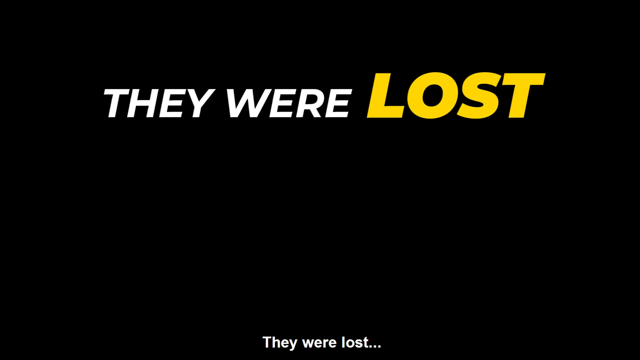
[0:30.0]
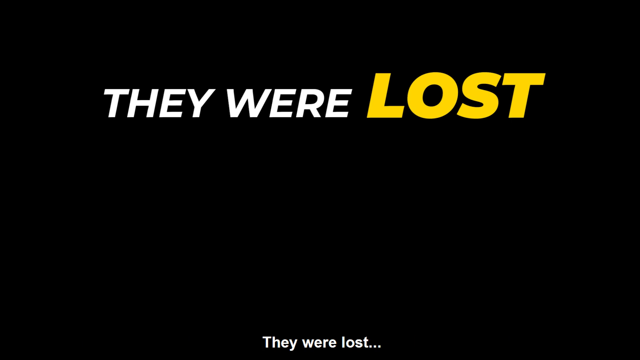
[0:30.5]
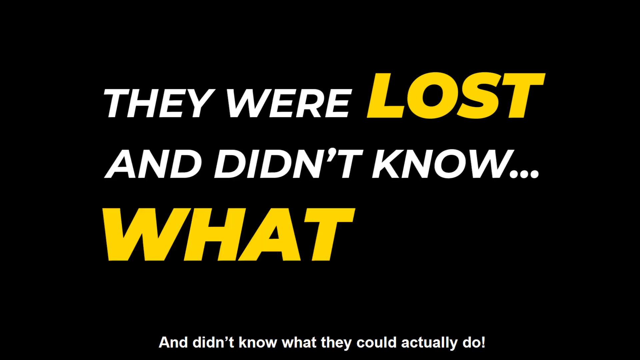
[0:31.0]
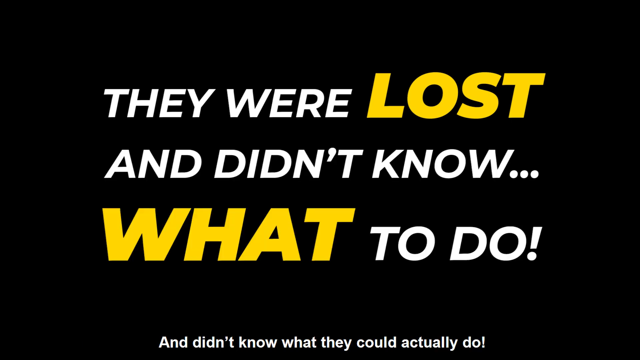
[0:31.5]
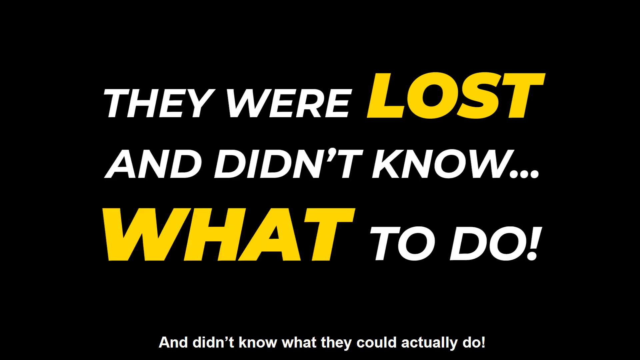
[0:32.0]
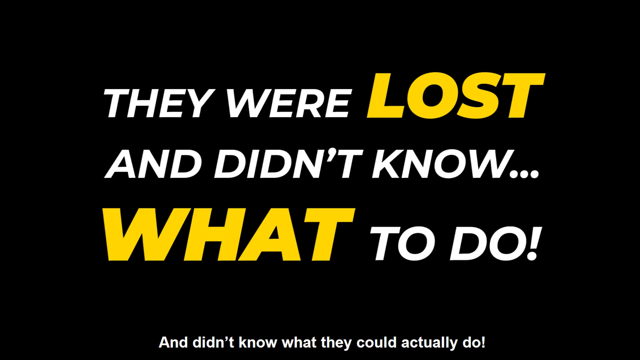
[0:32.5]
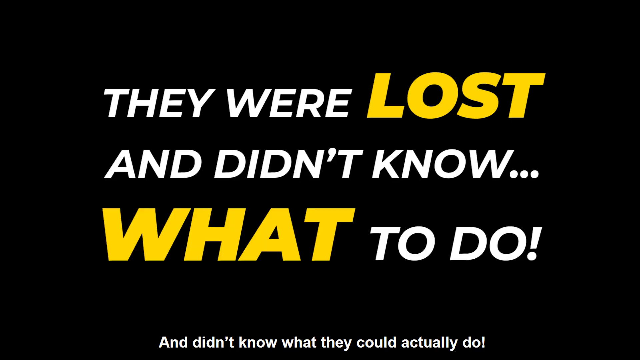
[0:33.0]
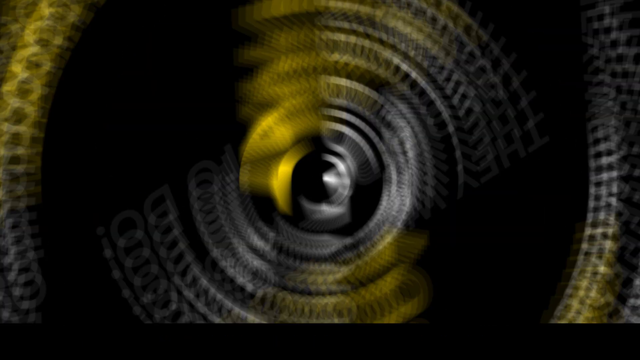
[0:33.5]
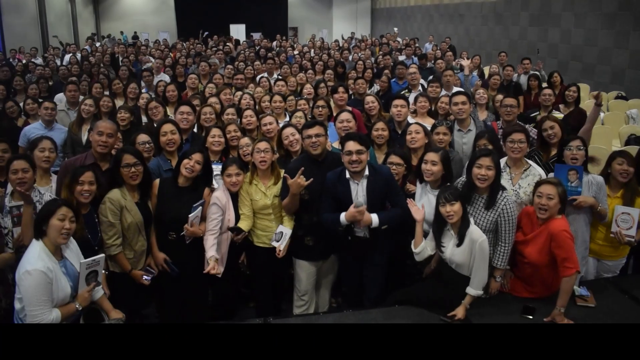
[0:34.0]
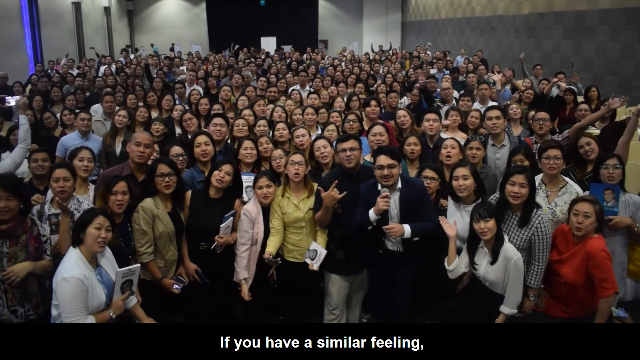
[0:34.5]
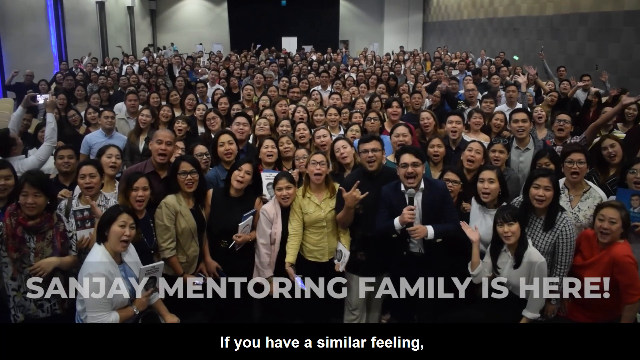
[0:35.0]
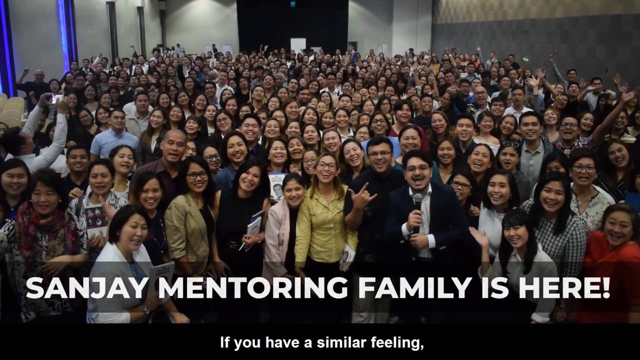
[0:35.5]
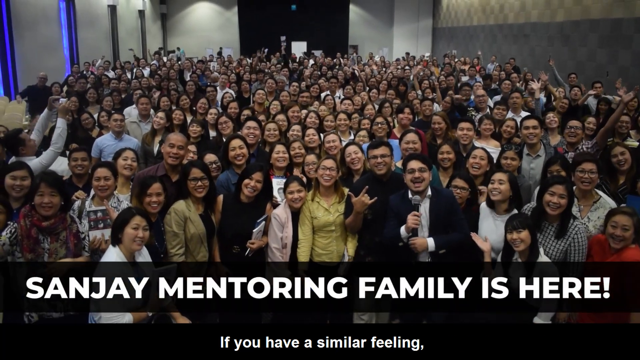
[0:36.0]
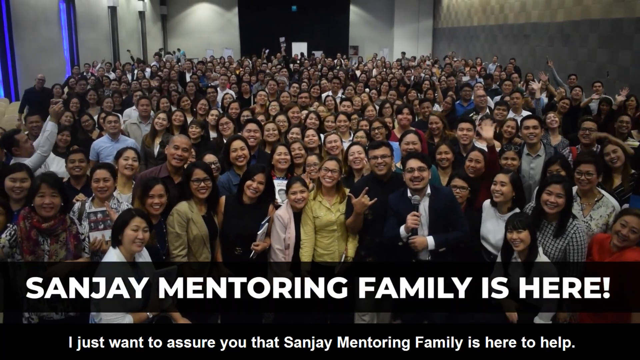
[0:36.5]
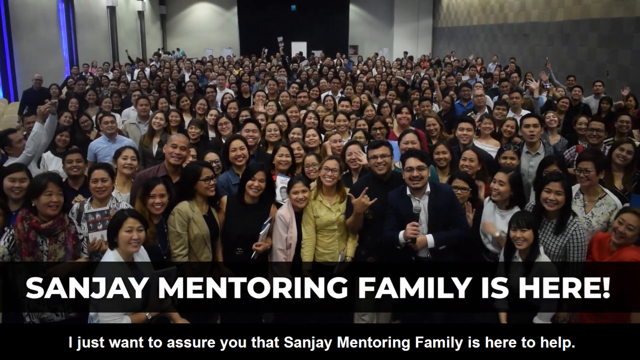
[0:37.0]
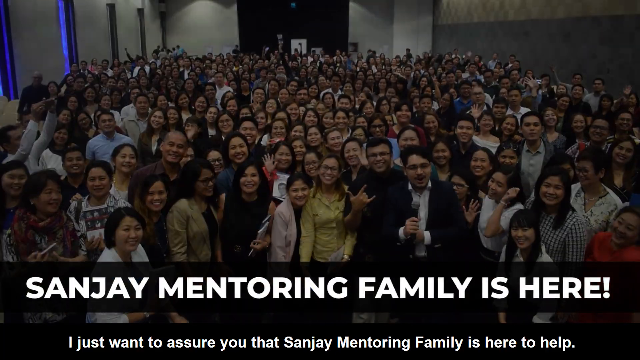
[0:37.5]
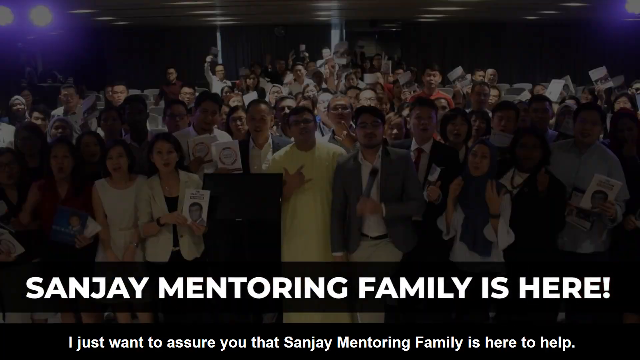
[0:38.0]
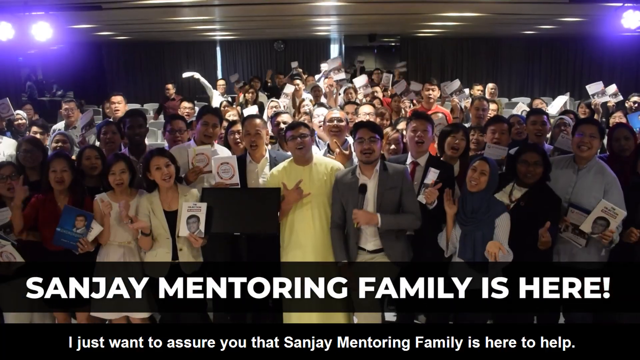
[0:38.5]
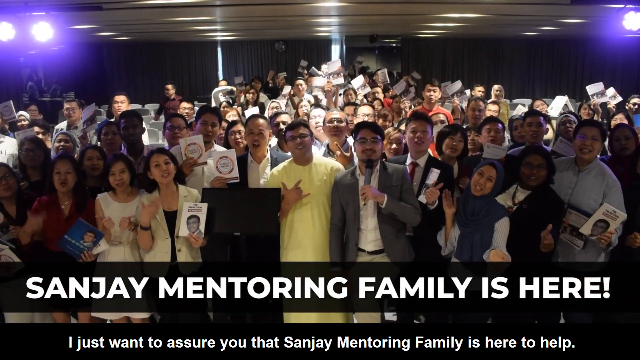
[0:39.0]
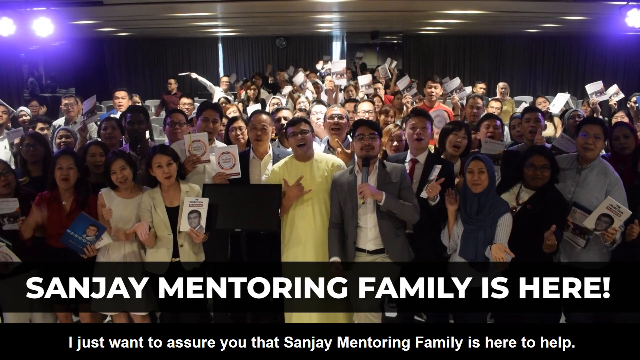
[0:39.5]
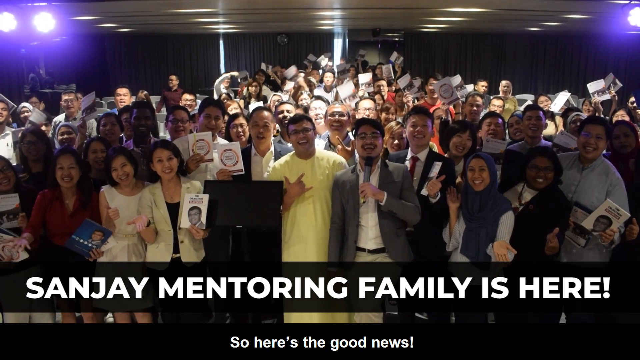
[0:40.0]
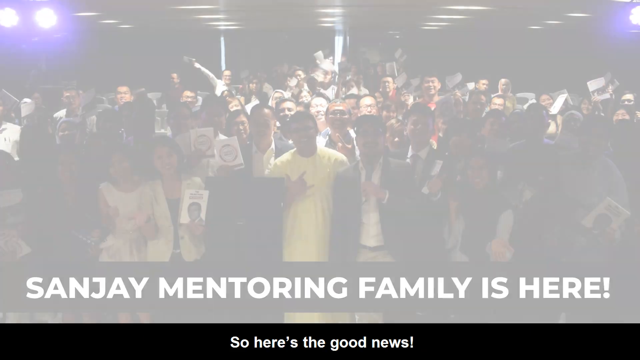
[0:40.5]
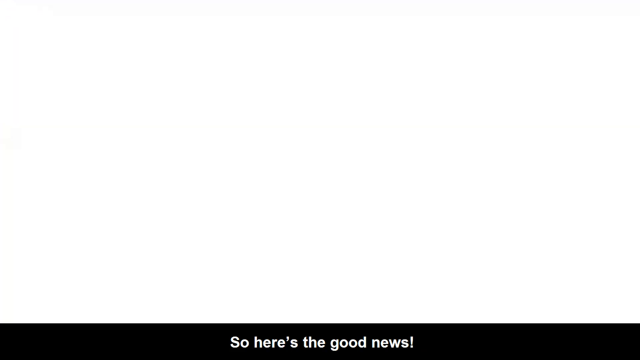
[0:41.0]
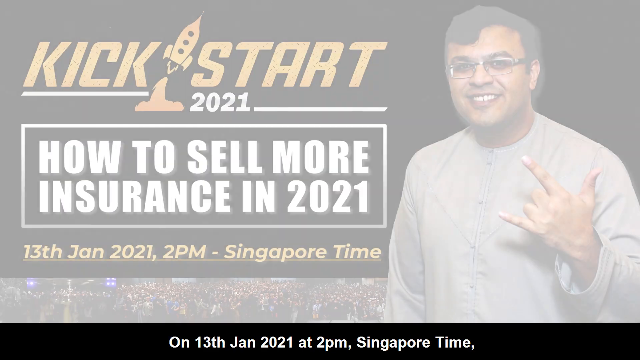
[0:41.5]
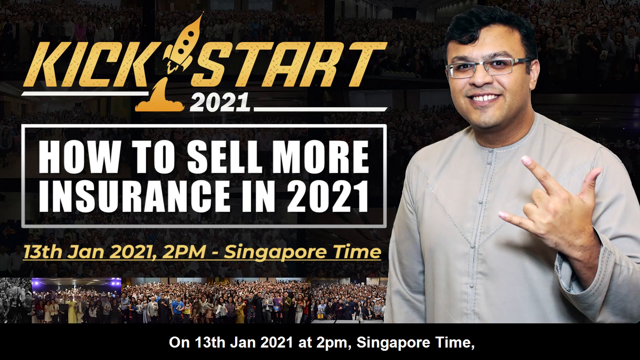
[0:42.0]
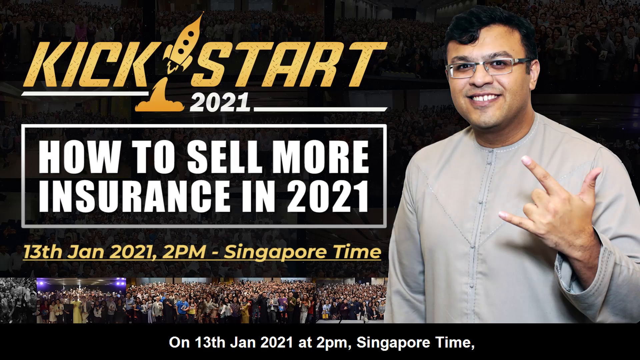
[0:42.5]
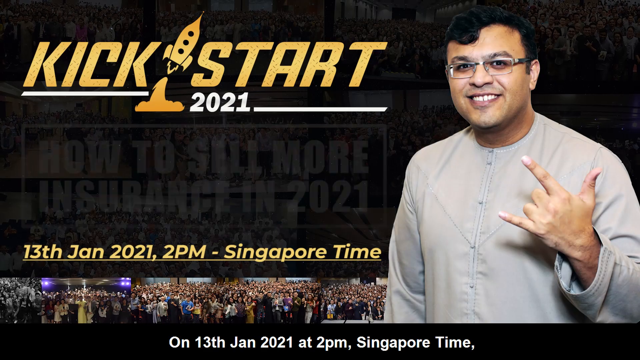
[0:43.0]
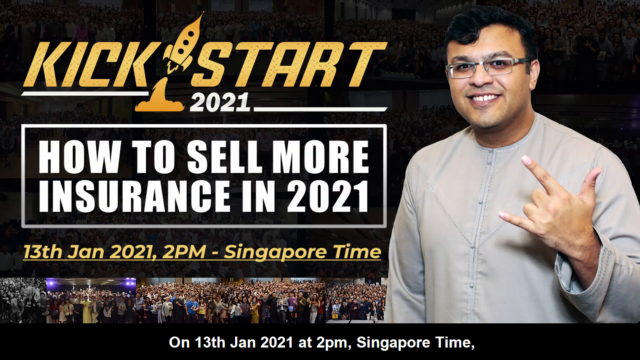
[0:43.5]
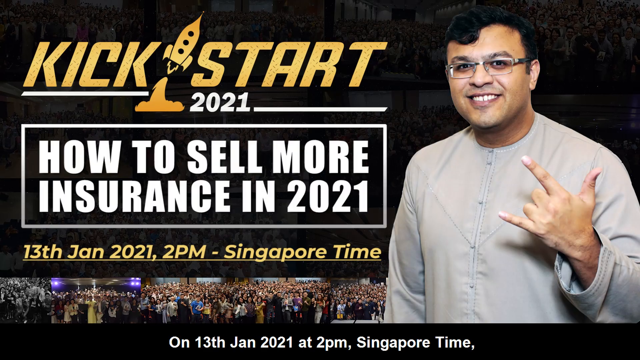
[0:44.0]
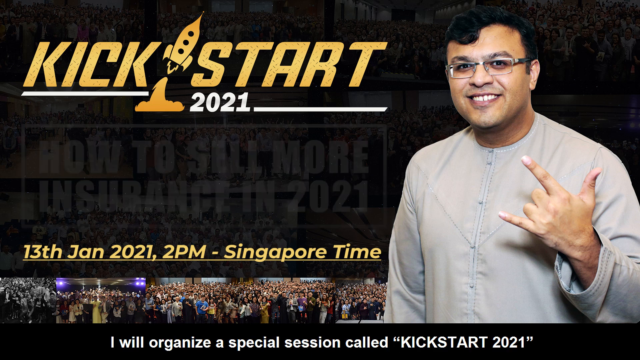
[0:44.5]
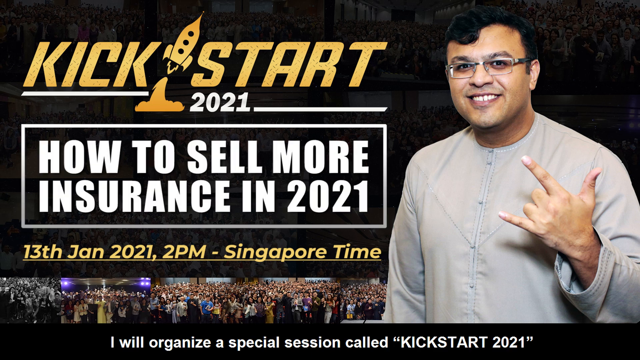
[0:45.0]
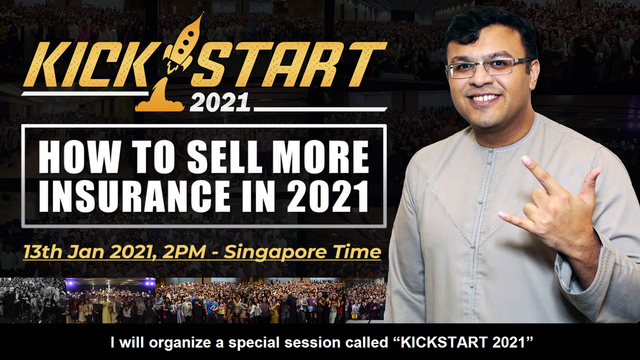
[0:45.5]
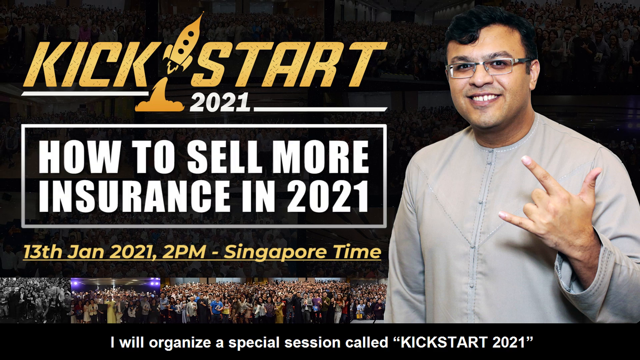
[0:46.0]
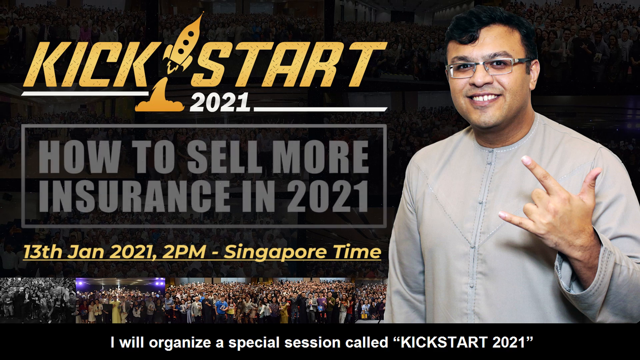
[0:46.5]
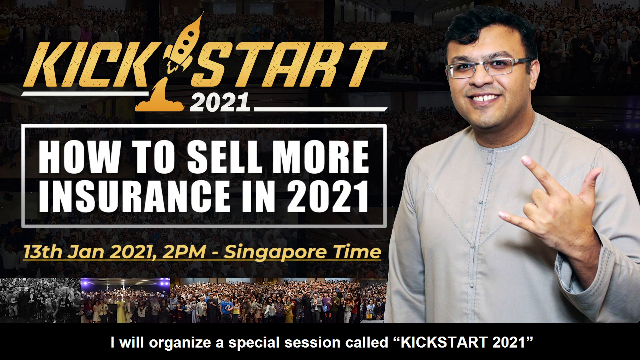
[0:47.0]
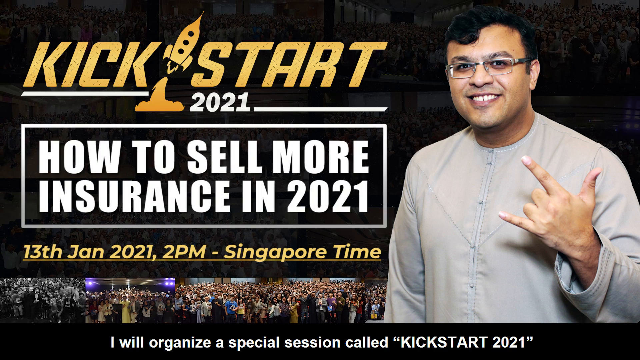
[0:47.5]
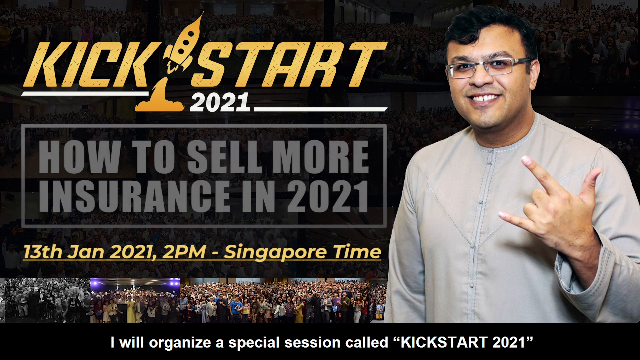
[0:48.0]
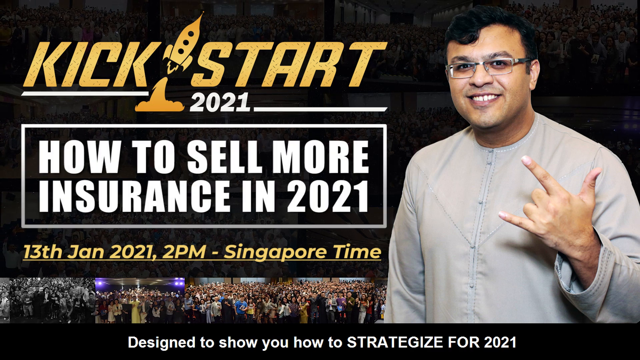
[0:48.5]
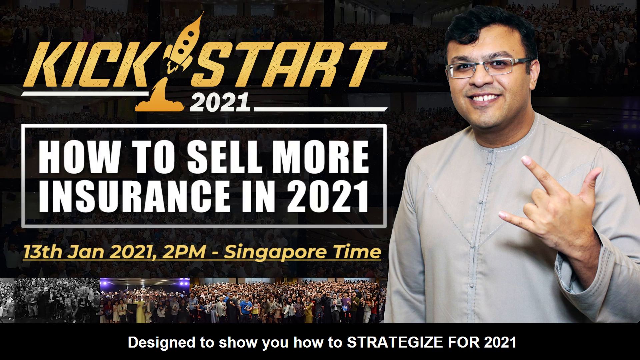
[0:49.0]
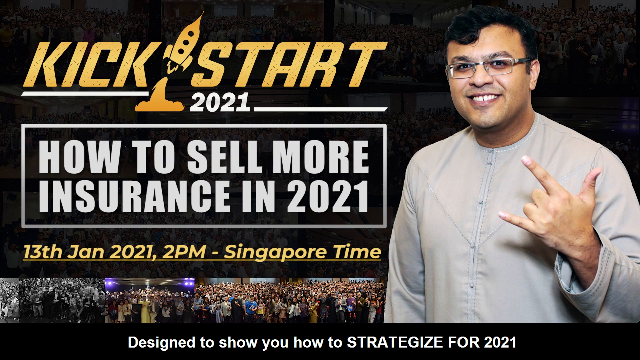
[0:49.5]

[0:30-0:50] A black screen reads "they were lost and didn't know what to do." The image spins and brings up a video of dozens and dozens of people crowded together in a room, likely 100 to 200 people. The men and women all appear to be facing forward and looking toward the camera. The caption reads "Sanjay mentoring family is here." The next shot shows multiple people standing and waving papers in the air at the camera in front of them, everyone laughing and smiling. A man right at the front in a yellow shirt makes a gesture with his right hand. Then an advertisement appears in which the man in front makes the same gesture as the man in the yellow shirt. The text reads "Kickstart 2021. How to sell more insurance in 2021," followed by the date "13th January 2021, 2pm" and "Singapore time." The "How to sell more insurance in 2021" box pulses.